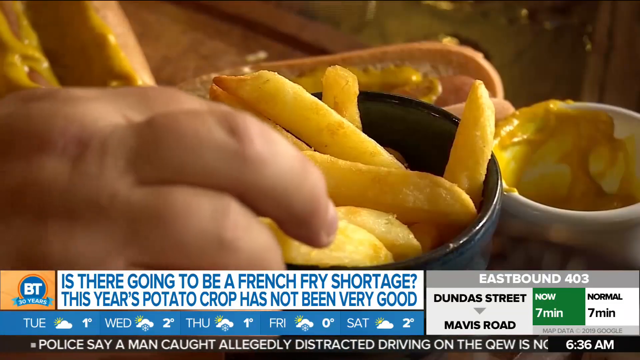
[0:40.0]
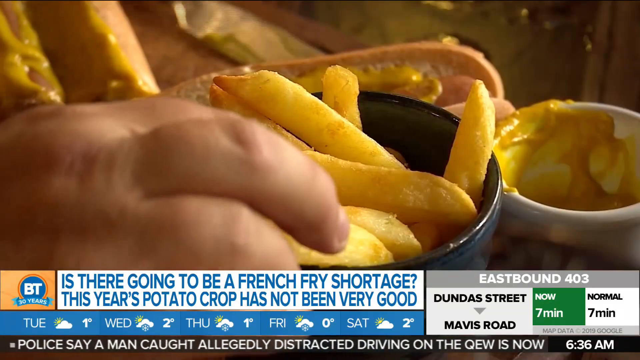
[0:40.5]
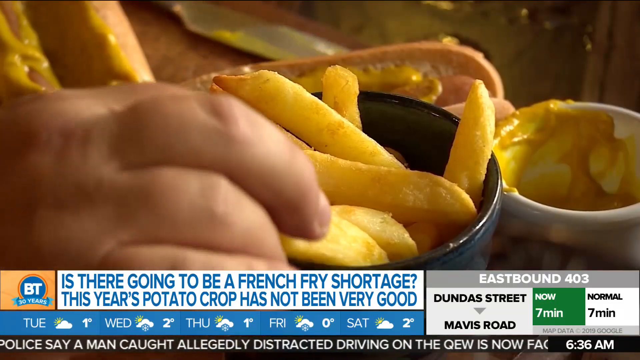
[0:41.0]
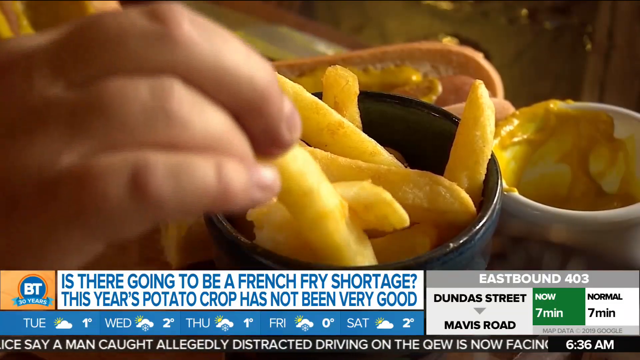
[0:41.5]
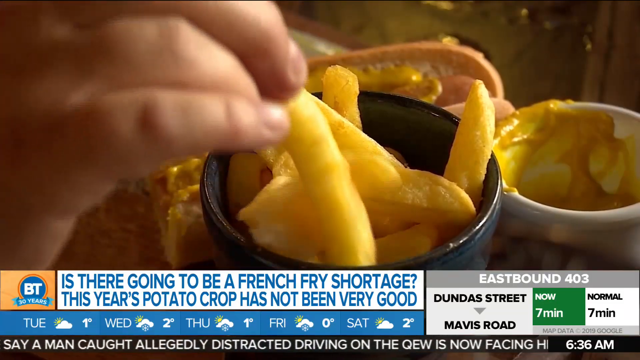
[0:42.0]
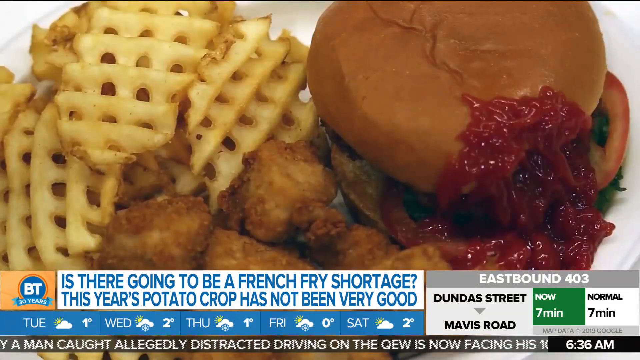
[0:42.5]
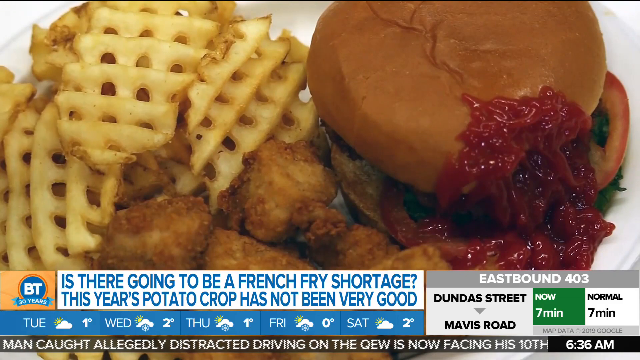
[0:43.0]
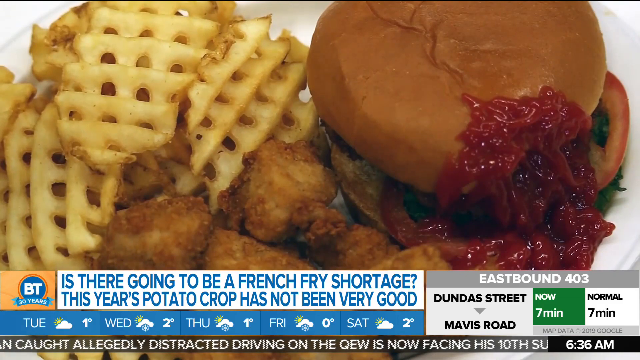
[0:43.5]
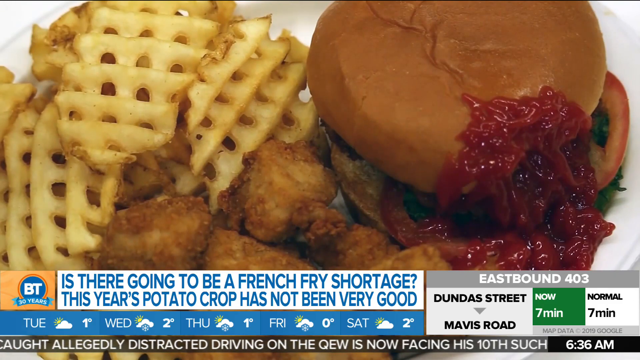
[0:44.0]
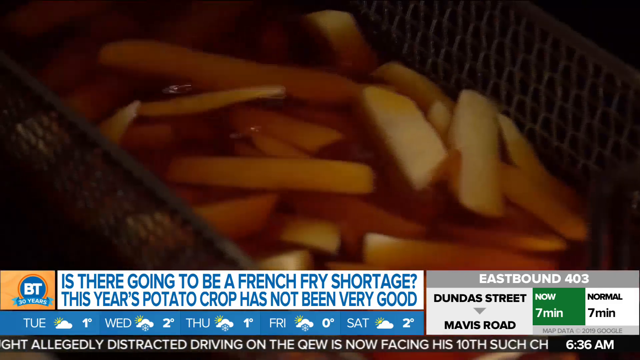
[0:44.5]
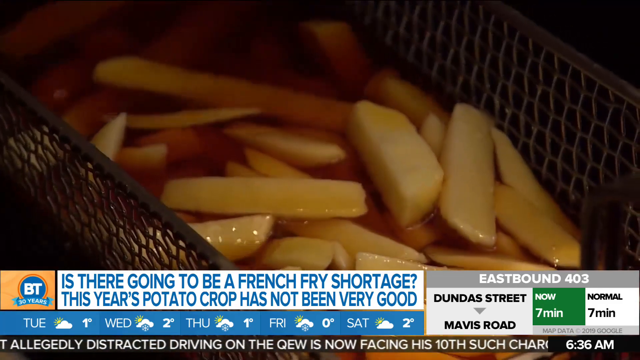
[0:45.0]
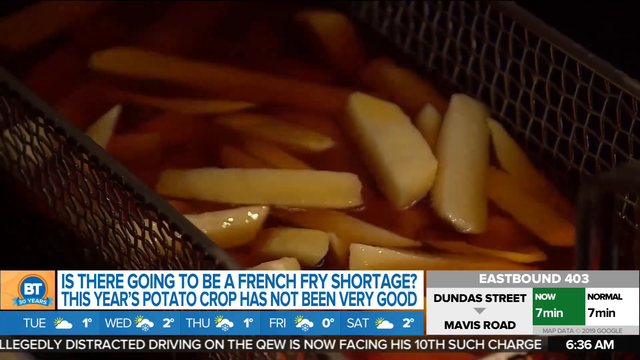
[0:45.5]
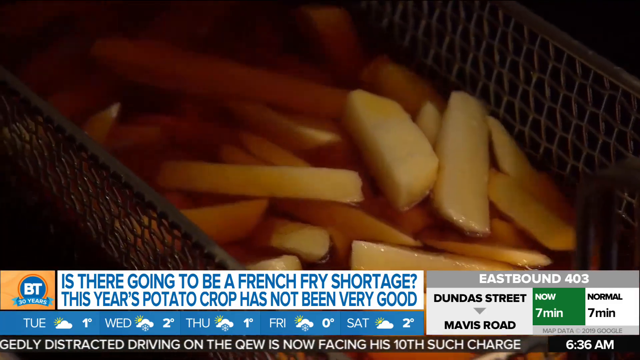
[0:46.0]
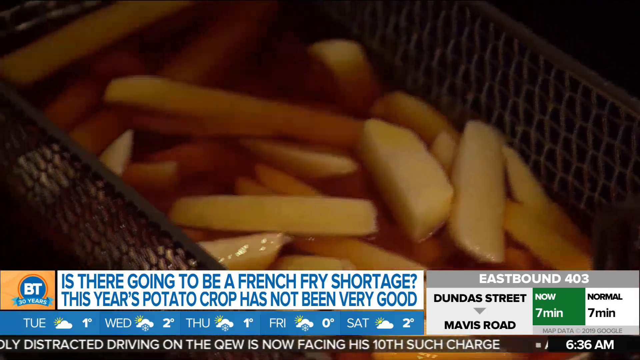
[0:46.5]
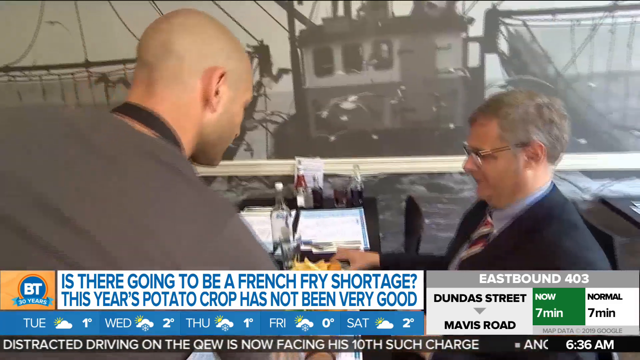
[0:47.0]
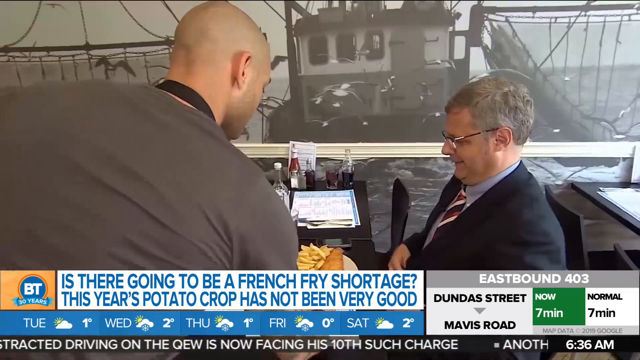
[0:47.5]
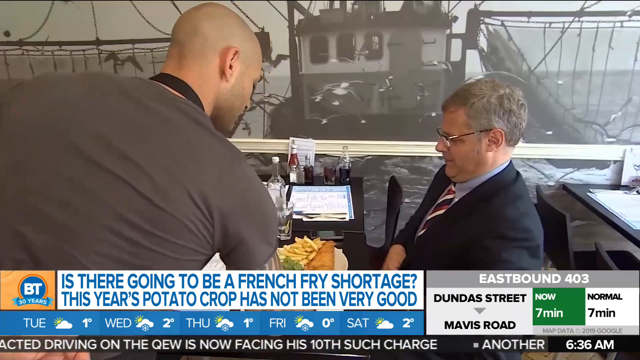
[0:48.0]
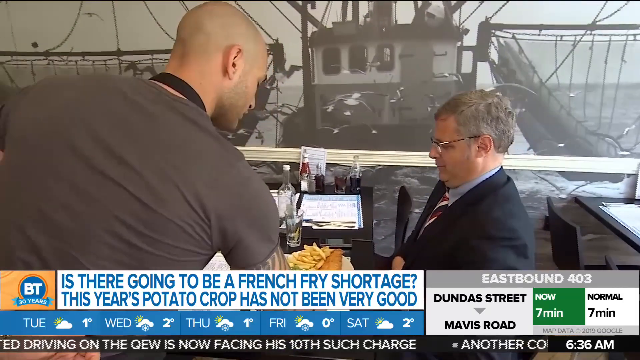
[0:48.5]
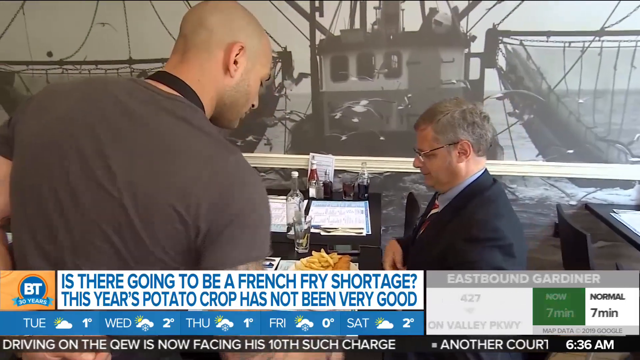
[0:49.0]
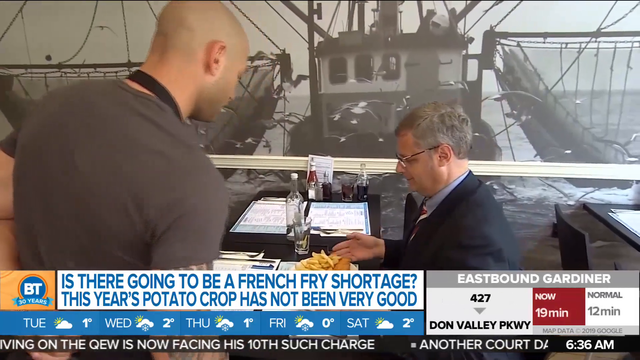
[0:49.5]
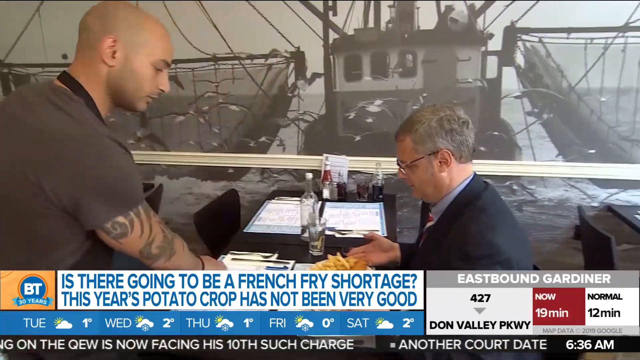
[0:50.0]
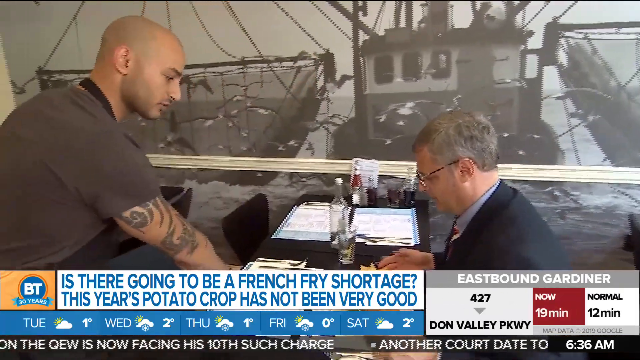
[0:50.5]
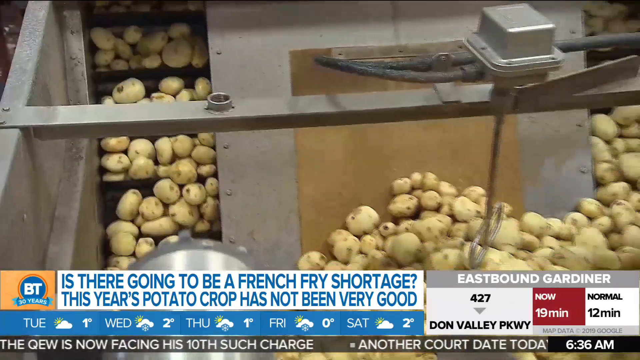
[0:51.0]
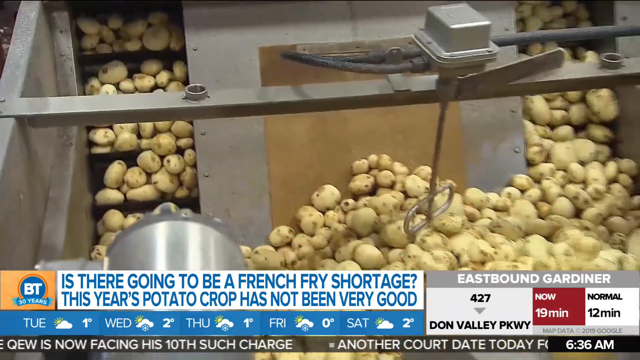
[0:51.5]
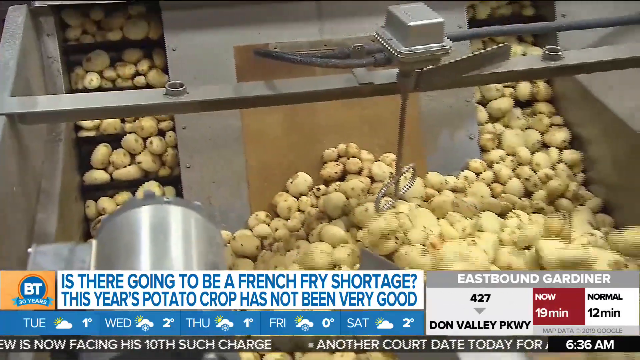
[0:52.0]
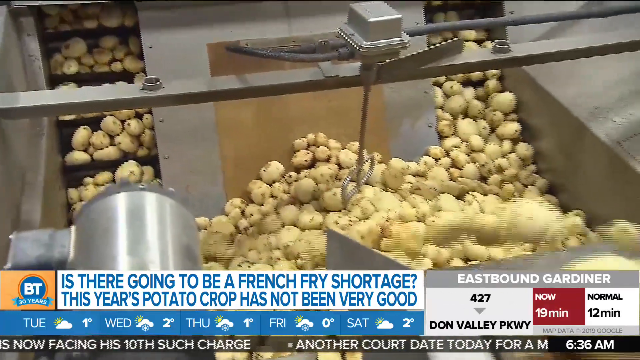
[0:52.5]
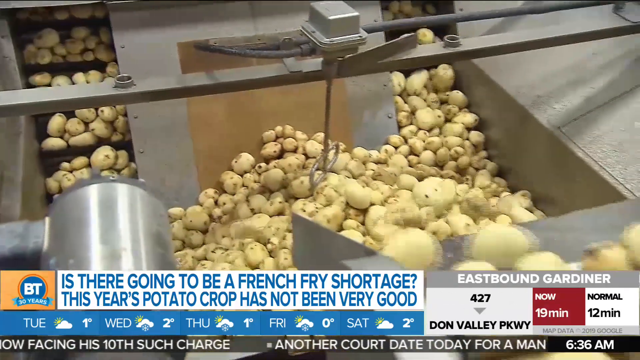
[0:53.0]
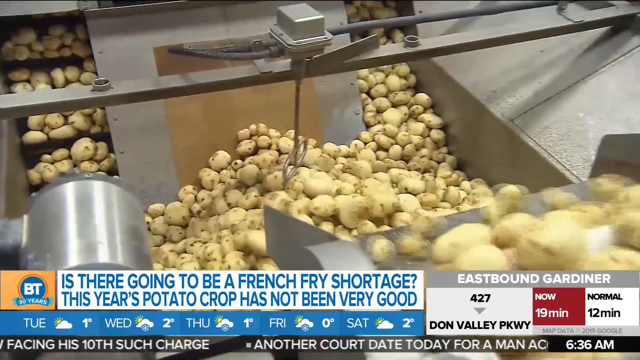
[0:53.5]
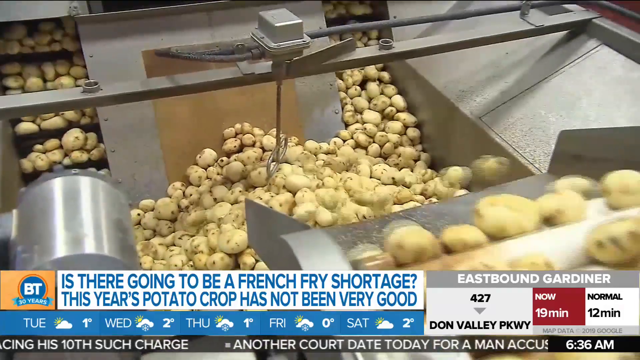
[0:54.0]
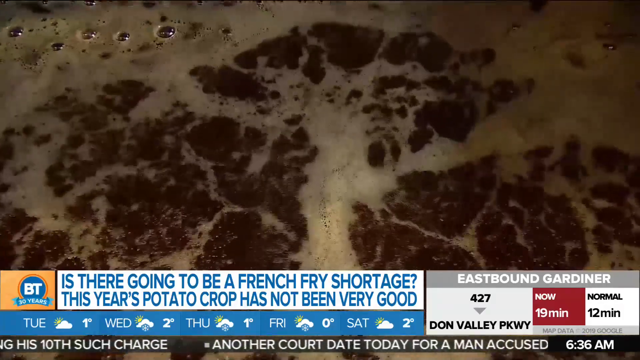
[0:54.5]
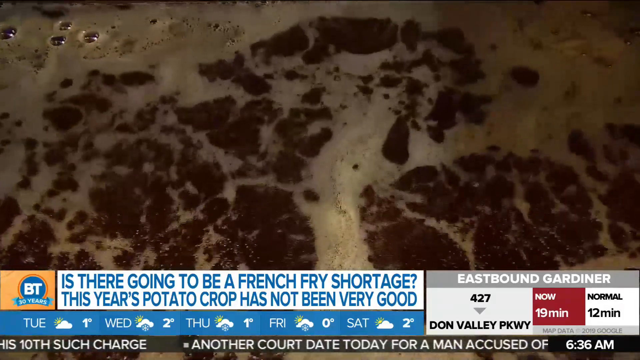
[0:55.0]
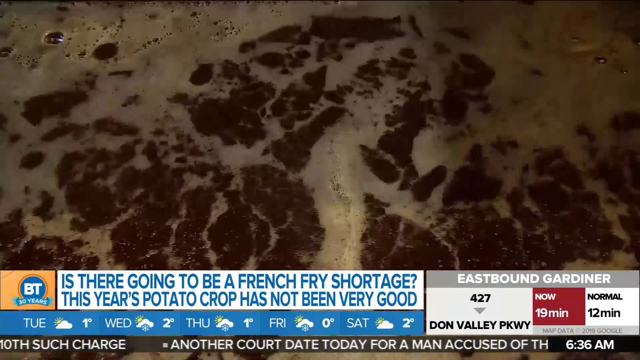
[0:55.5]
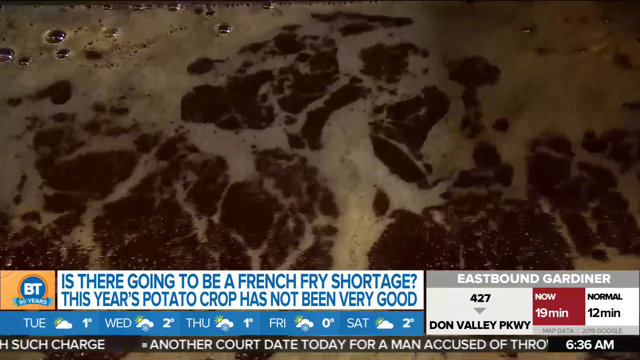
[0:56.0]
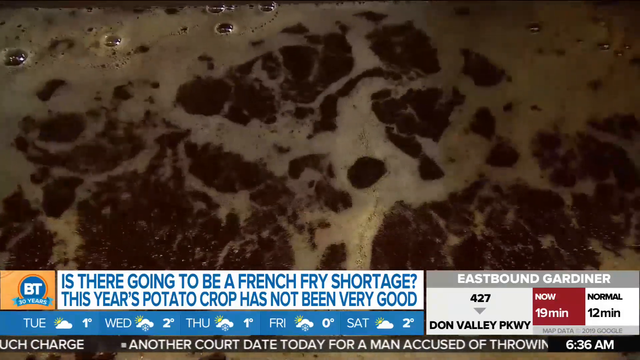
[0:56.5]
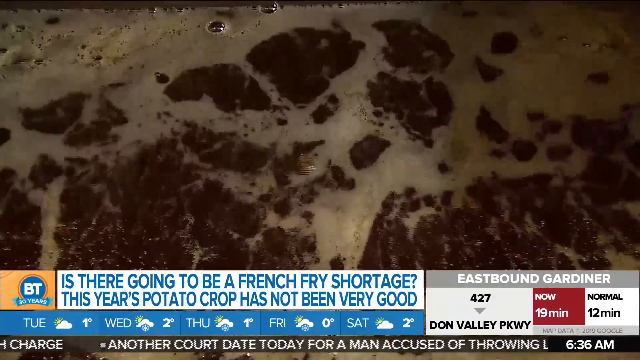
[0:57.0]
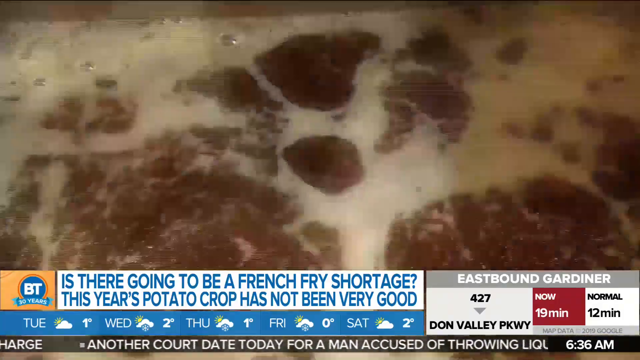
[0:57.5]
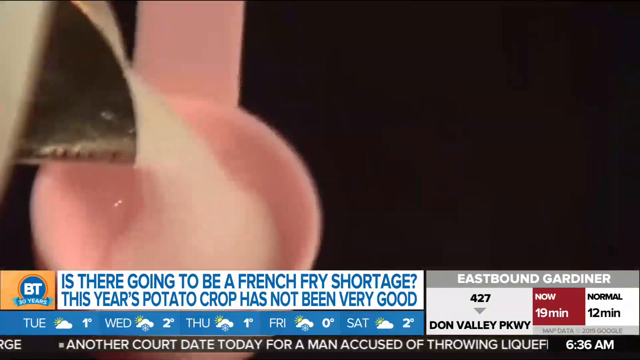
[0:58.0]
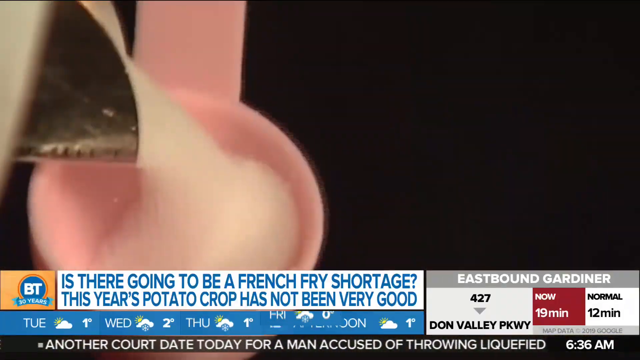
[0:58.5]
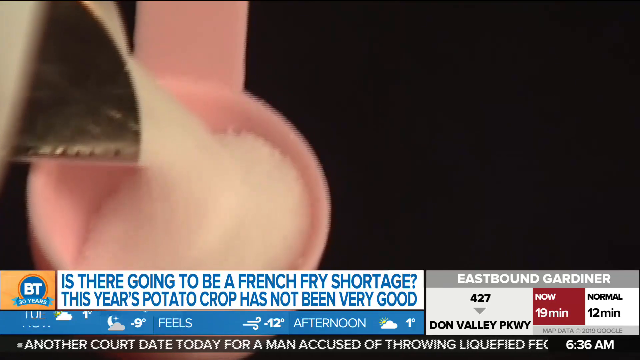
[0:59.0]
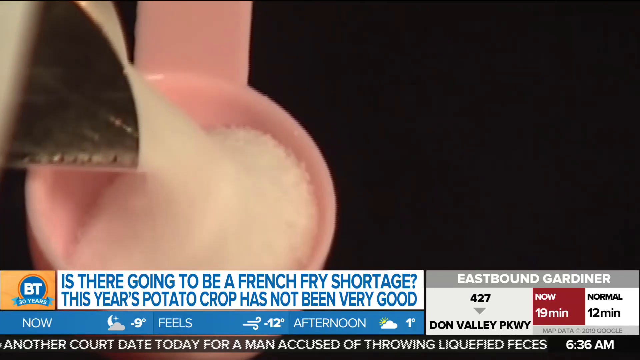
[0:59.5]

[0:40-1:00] A news segment shows graphics at the bottom of the screen: the news organization's symbol, "BT," in a blue circle with a red outline, and a banner reading "30 years" below it in a gold square in the bottom left. To the right, a white rectangle reads "Is there going to be a French fry shortage? This year's potato crop has not been very good." At the bottom of the screen, a blue rectangle shows the weather forecast for Tuesday to Saturday, and to the right a white rectangle shows traffic information for eastbound 403. Above, a video shows someone eating French fries: a black bowl holds fries, a white bowl to its right seems to contain mustard, and a hot dog is to the left. A close-up shows a person's hand taking one of the fries. The shot changes to what looks like Chick-fil-A food: waffle fries in the top left, Chick-fil-A nuggets below them, and a Chick-fil-A sandwich in the top right with a glob of ketchup on its lower right side. Next, potatoes are in a fry basket, with brown oil pooling around the fries in the mesh basket. Then, in a restaurant, a waiter with a shaved head and a gray t-shirt is seen from behind, putting down a plate of fries and what appears to be fish in front of a man sitting to the right. The seated man wears a black suit, a blue shirt, a striped white and red tie, and glasses; he has gray hair and sits at a black table. The waiter, on the left, has his right hand extended onto the table, and a tattoo is visible on his tricep area. The video then shows potatoes being sorted in a factory, with a large amount of potatoes rolling down an incline into a bin. A large amount of brown oil is being heated, with bubbles and white suds on top. A close-up shows a pink measuring cup, and what appears to be salt is poured into a little pink spoon. Finally, a person sits at a table in a restaurant, seen from the right side without their face visible.